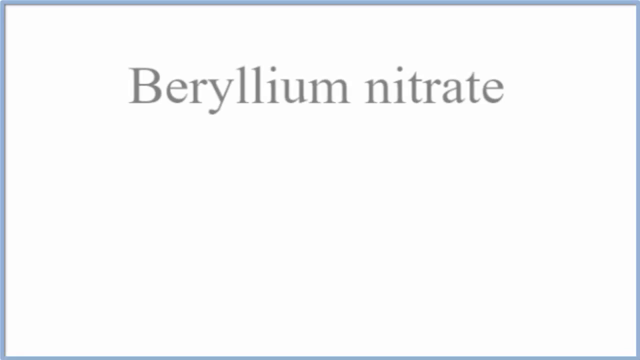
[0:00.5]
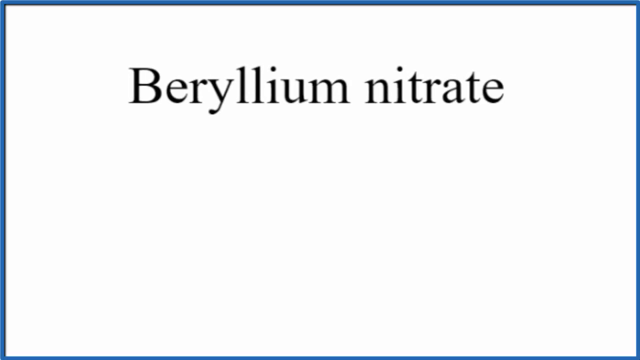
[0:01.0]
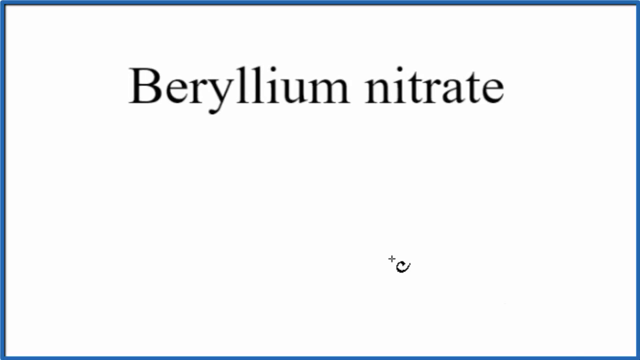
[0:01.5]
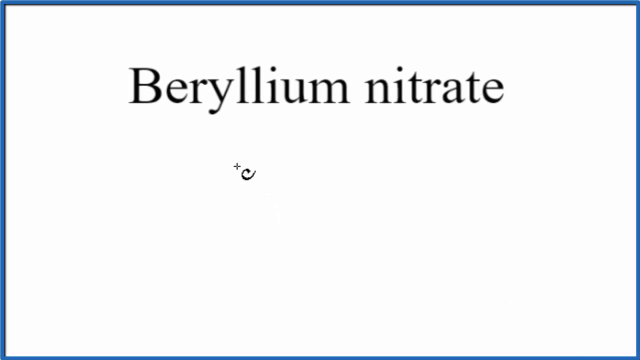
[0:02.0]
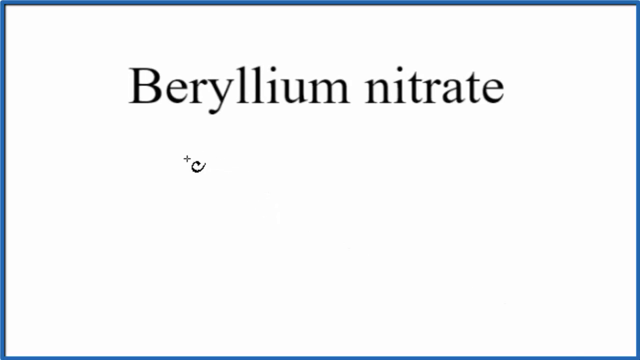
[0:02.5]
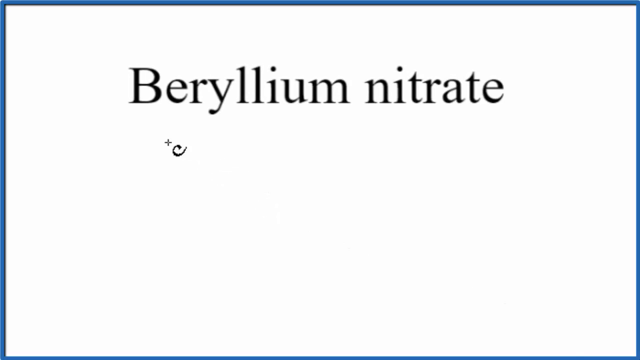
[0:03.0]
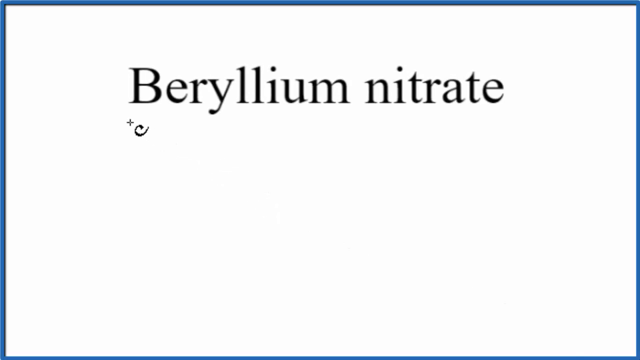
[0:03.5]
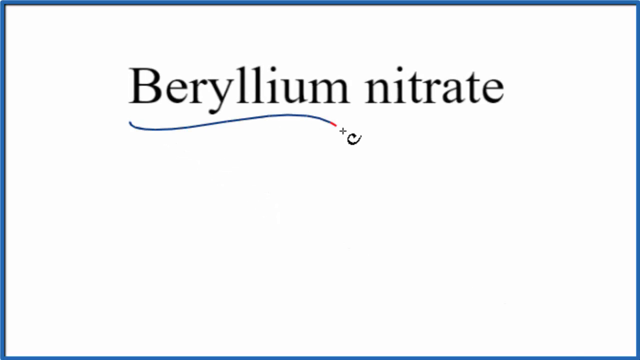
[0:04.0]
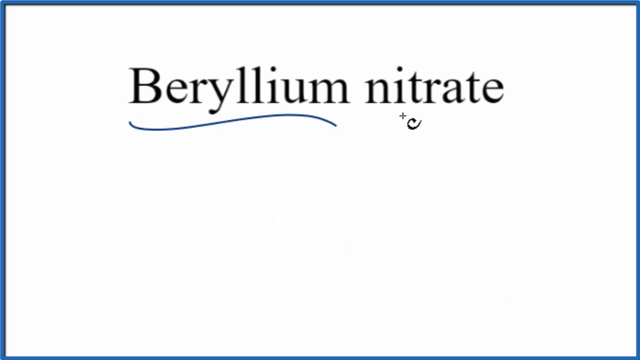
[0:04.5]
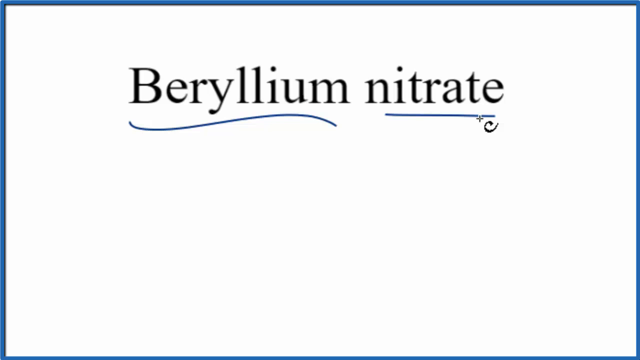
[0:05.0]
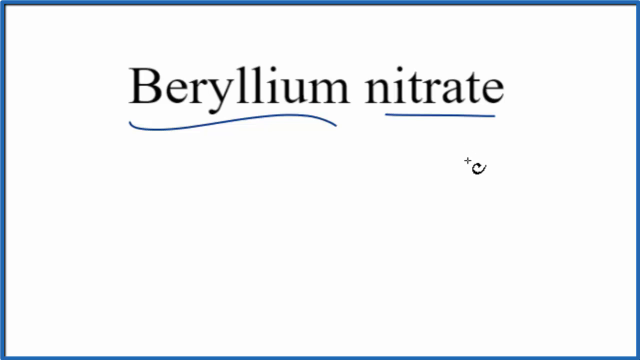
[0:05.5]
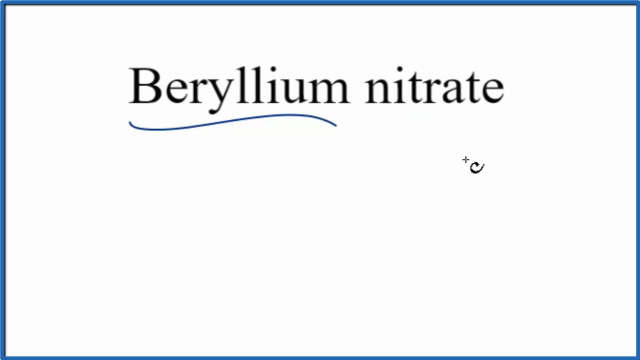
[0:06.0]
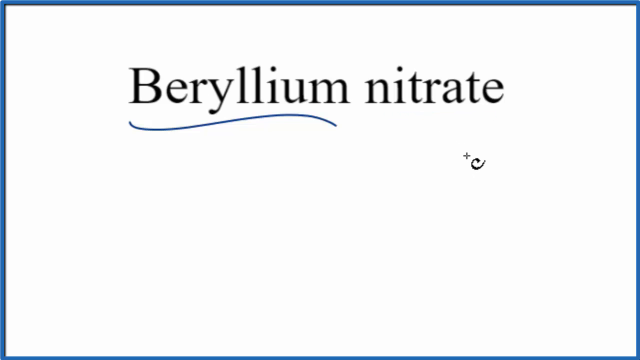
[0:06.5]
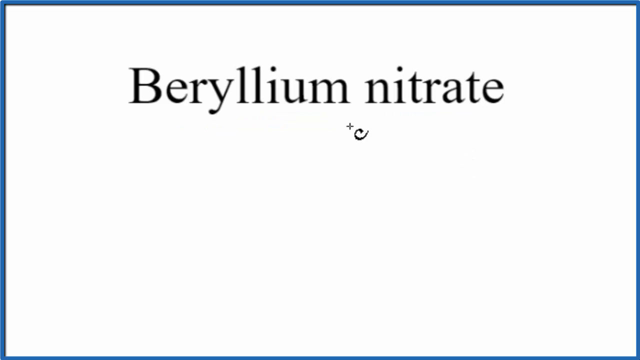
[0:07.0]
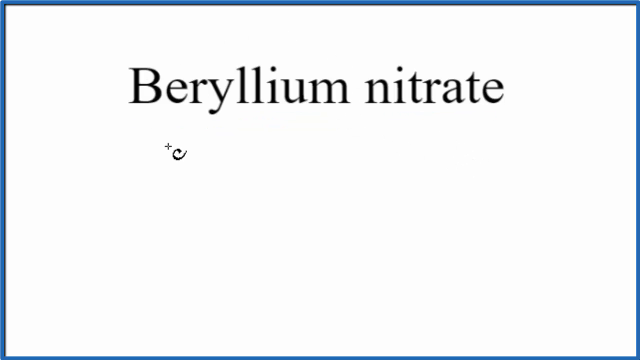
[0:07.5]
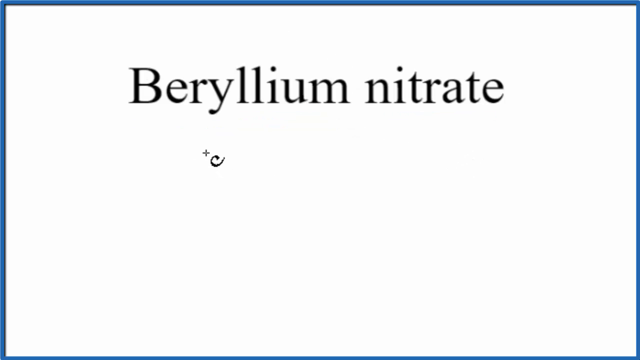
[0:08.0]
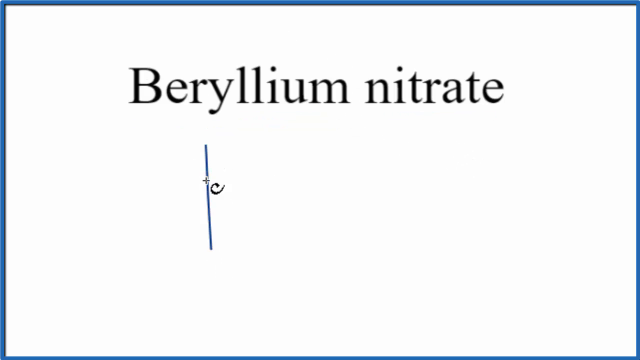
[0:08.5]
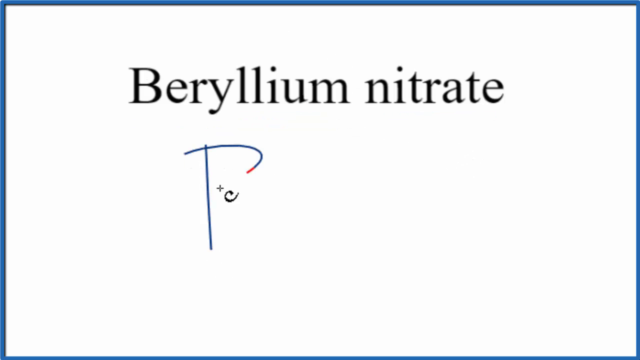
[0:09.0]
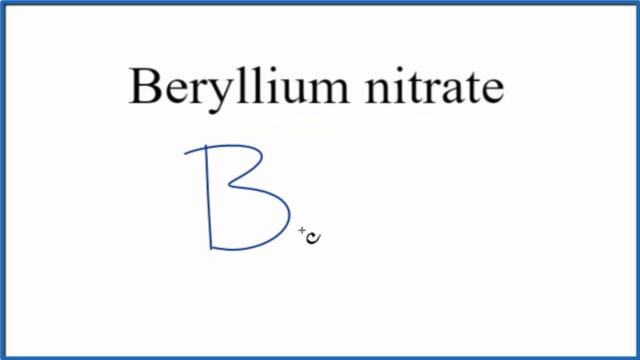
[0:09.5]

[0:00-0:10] A white screen shows the words "beryllium nitrate," with a blue line scribbled beneath each word, and there is some dark shading at the bottom of the screen. A stylized cursor, like a C with a plus sign on it, looks more like a comet shape as it moves. A formula beginning B, E, N, O is written out. The underlines disappear and then come back, and the cursor writes B, E and O, with a one and a dash over the O and a three at the bottom of the O, forming a simplified chemical formula for beryllium nitrate. The cursor, still C-shaped, then circles the last part of the formula, the N and O, and outlines and draws around the screen.